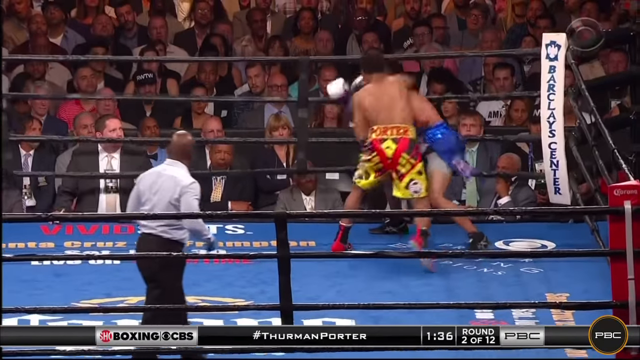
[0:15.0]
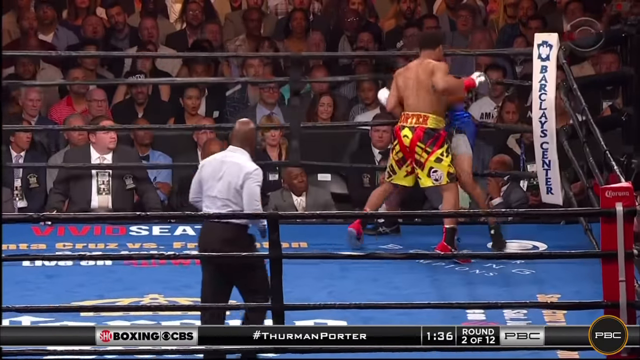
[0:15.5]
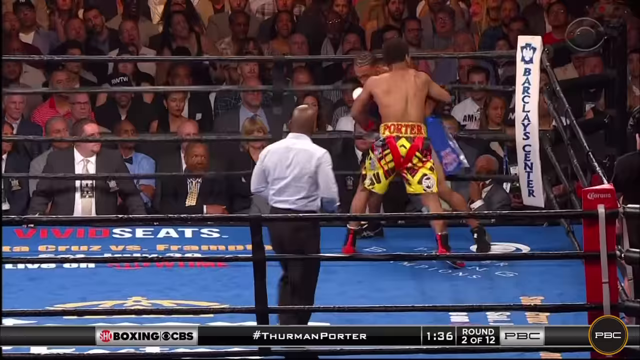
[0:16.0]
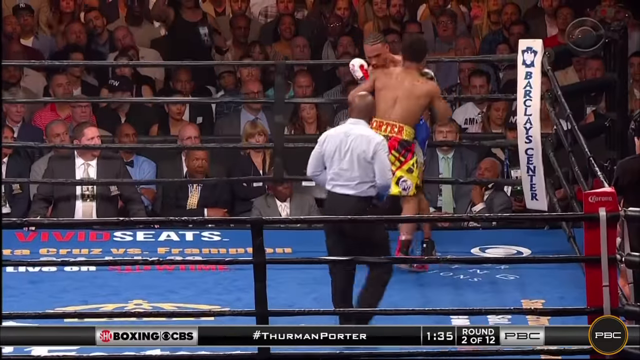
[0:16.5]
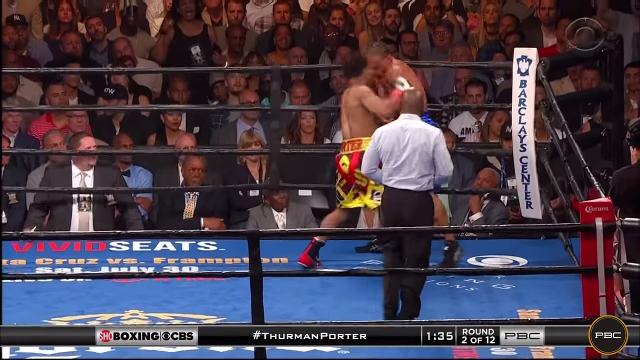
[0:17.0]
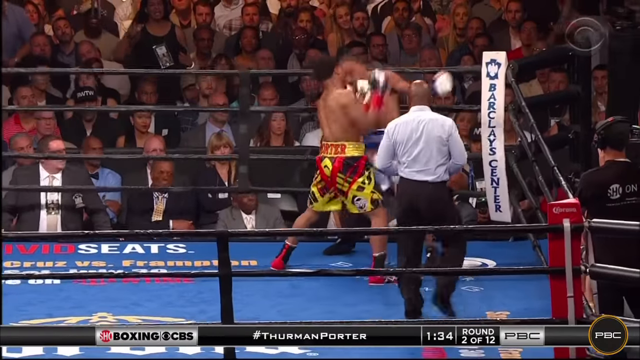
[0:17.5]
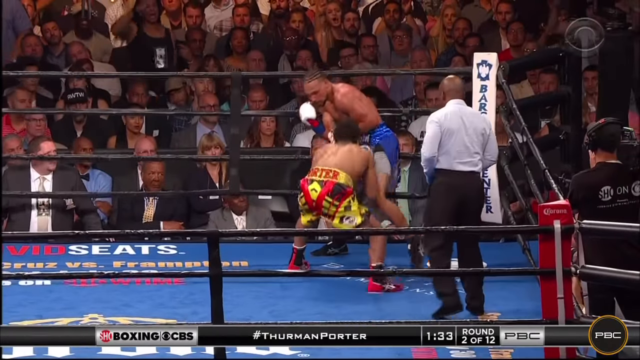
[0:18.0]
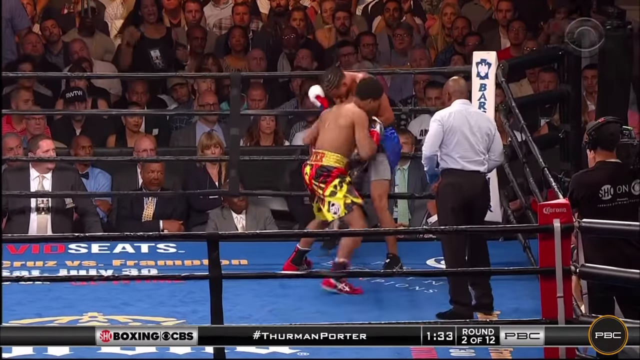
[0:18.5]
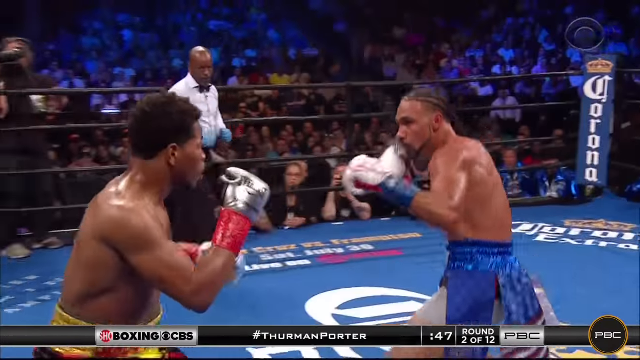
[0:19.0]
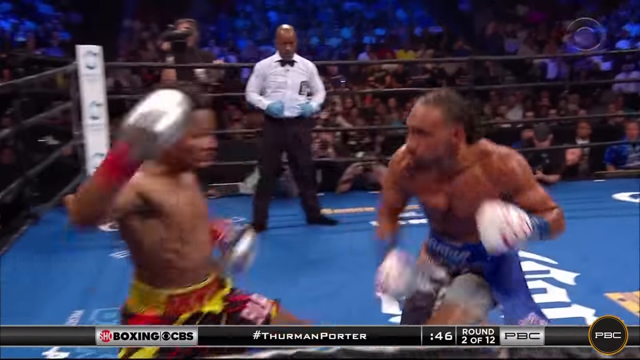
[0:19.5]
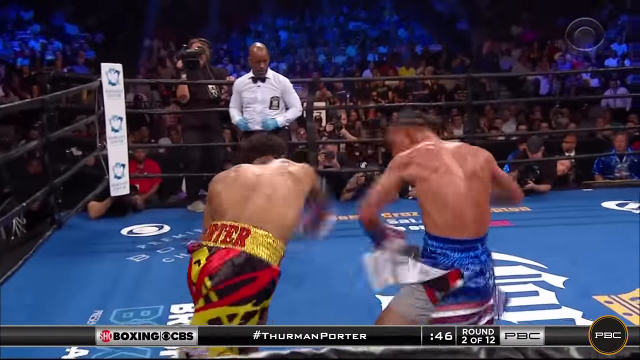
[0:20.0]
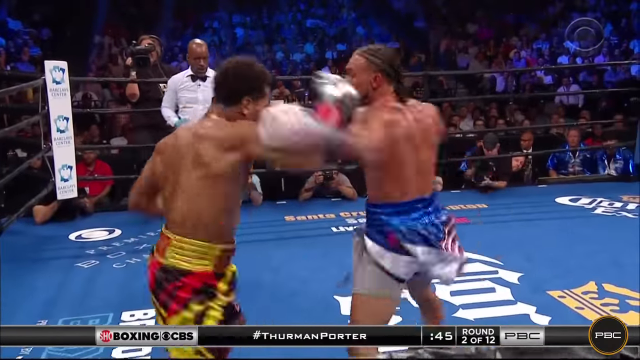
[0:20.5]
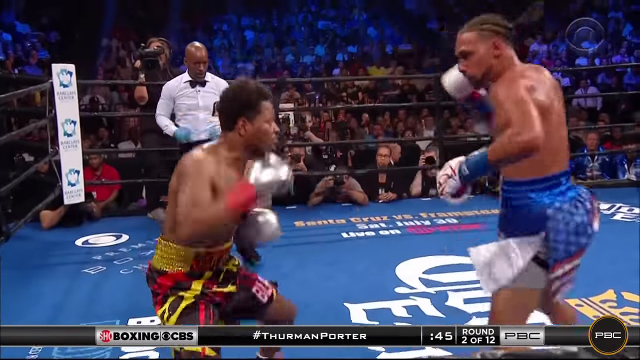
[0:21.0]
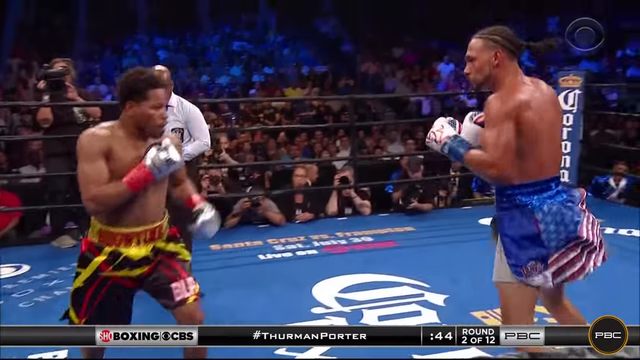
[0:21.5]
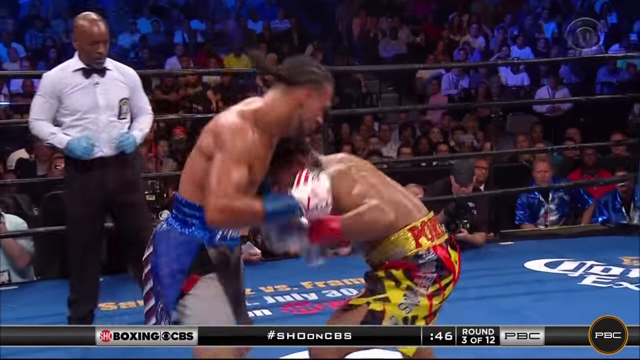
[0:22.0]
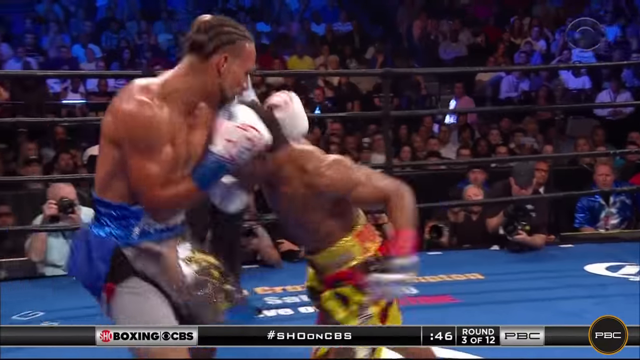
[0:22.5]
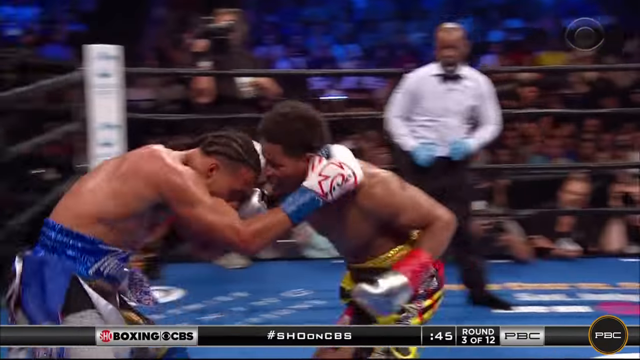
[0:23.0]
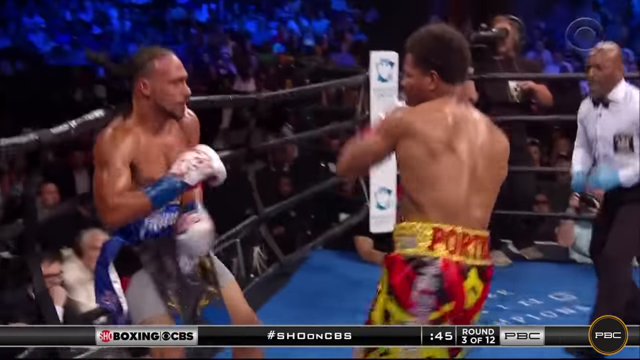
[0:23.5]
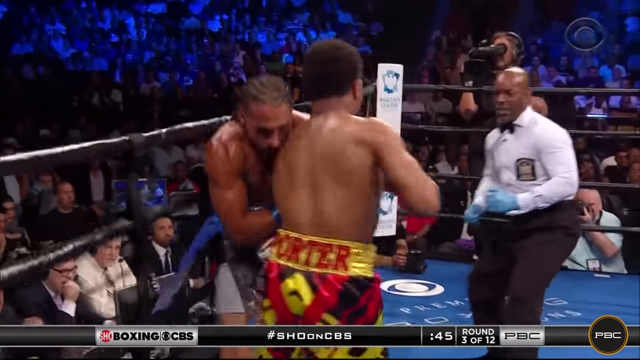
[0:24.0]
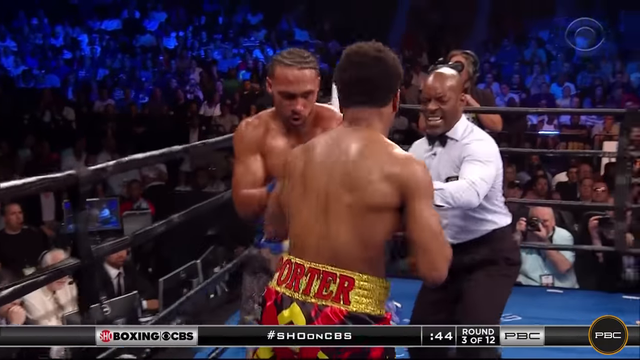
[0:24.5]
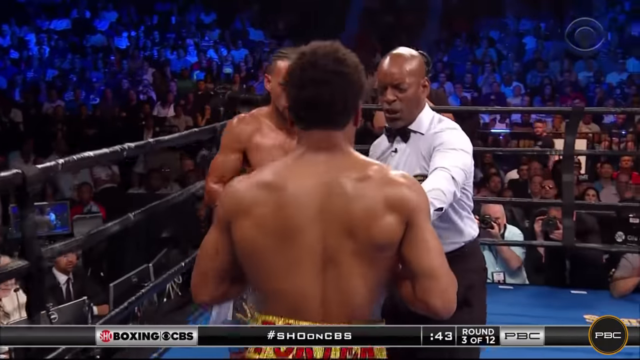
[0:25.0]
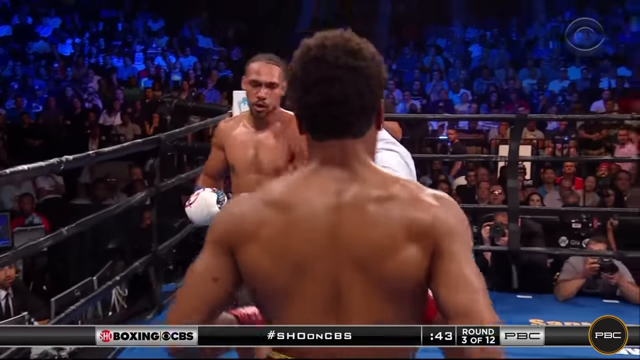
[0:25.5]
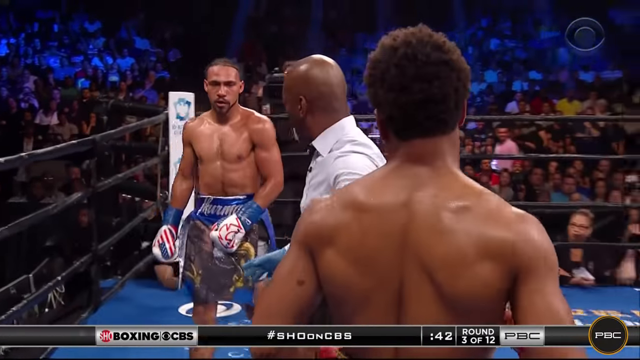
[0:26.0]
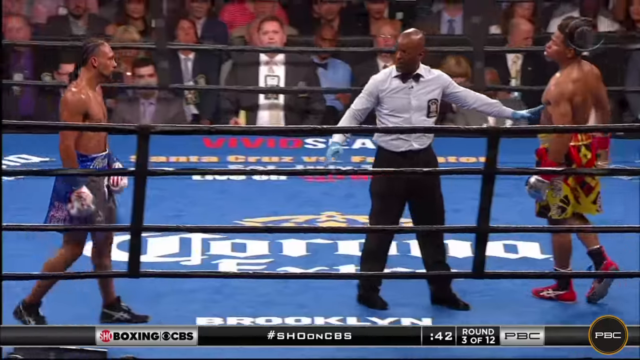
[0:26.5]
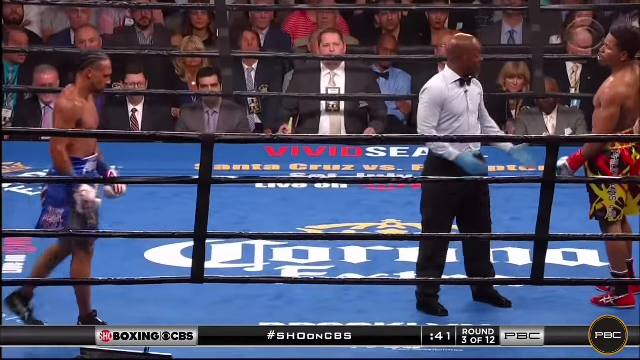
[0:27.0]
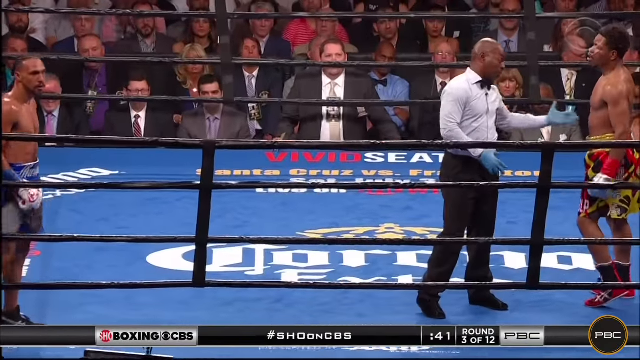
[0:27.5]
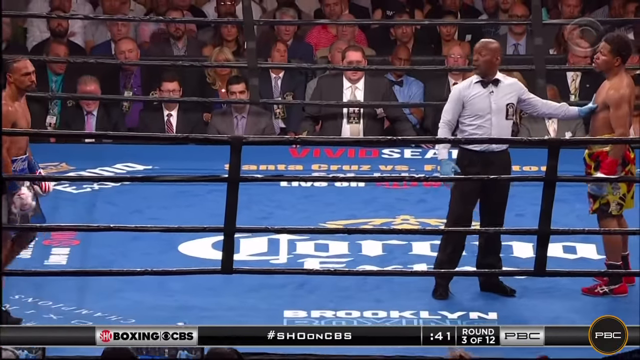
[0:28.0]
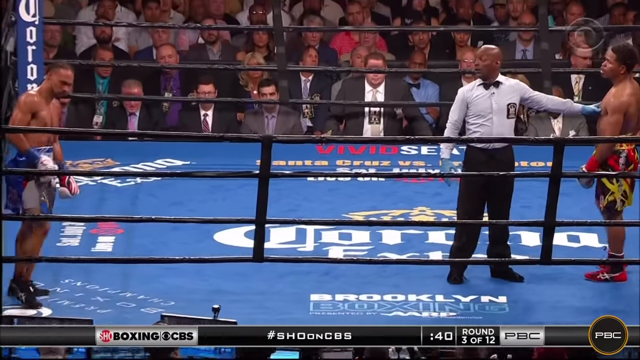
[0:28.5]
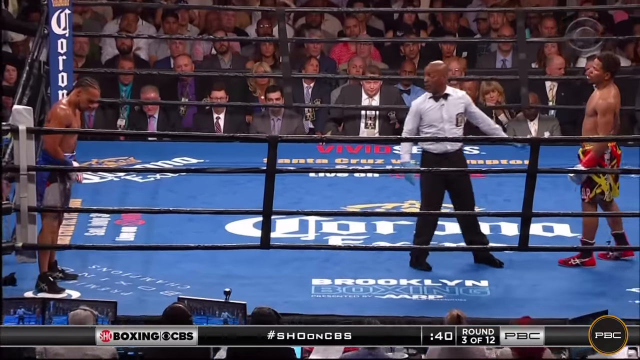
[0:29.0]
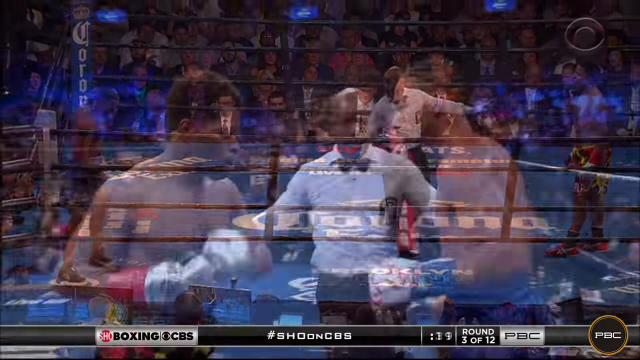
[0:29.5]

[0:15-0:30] The boxer in yellow, black, and red shorts, with the name Porter on the back of them, is leaned up against the boxer in blue shorts on the ropes, throwing punches at his face and body. A jump cut shows them exchanging blows in the middle of the ring, and after another jump cut the boxer in black, red, and yellow shorts hits the boxer in blue with a couple of shots to the body. The referee separates them and talks to the boxer in the yellow and black shorts. The action begins in round two of twelve and changes to round three of twelve across the jump cuts. At the bottom left of the screen are boxing CBS titles with the Showtime and CBS logos next to them; to the right is "#ThurmanPorter", then a clock ticking down, then the round number of twelve, and then a PBC logo that appears to be the fighting league's logo. The ring floor is blue with many different logos spread along it. Outside the ring are many people in suits, some with cameras, some sitting in front of computer screens, and others just sitting and watching the fight.